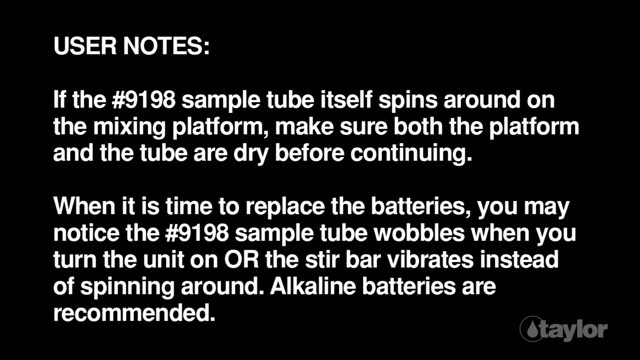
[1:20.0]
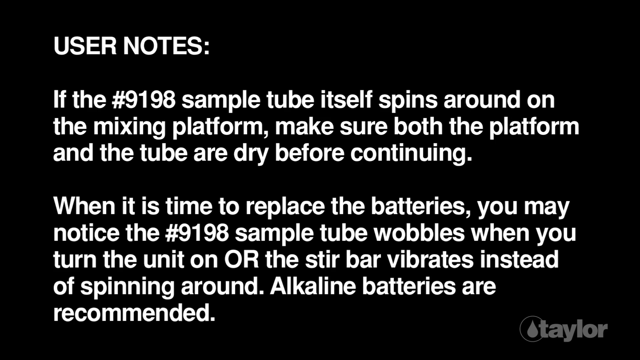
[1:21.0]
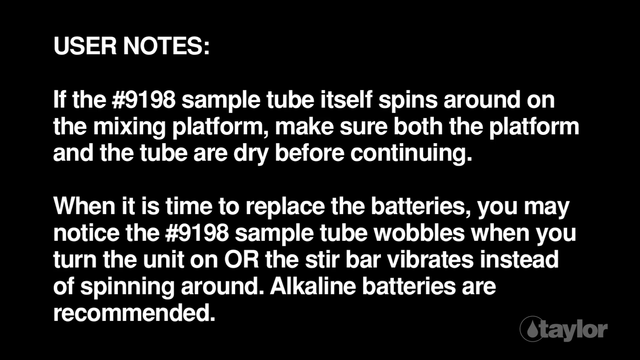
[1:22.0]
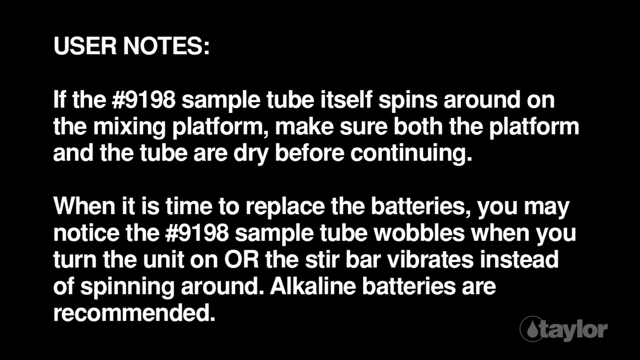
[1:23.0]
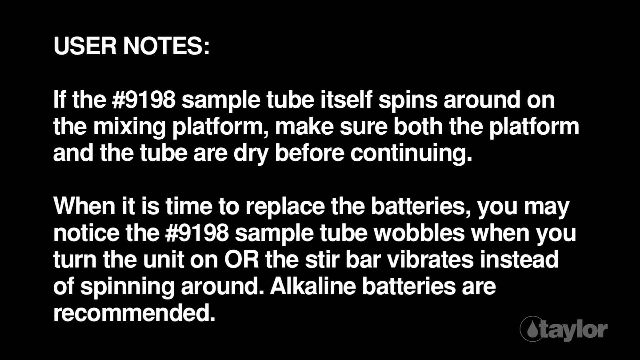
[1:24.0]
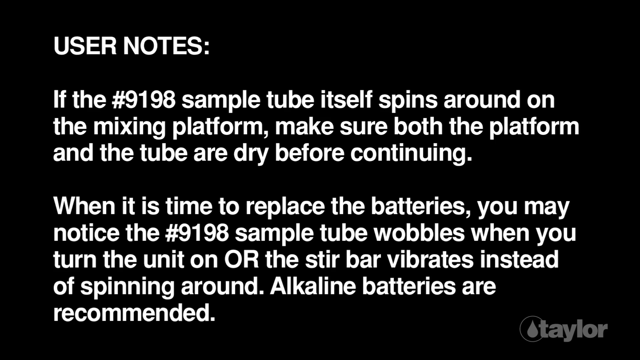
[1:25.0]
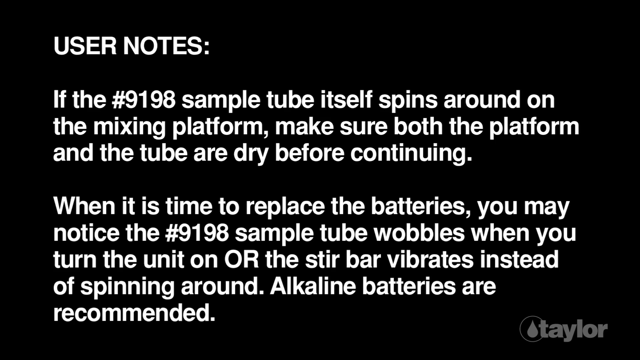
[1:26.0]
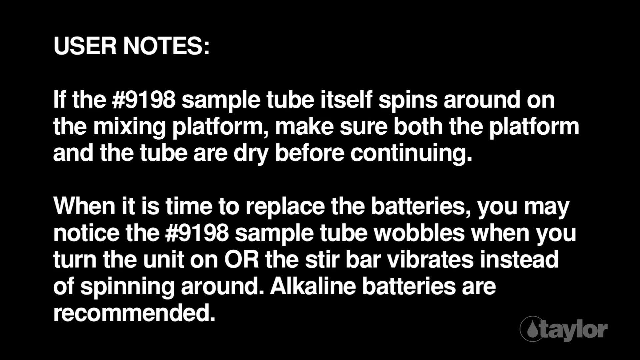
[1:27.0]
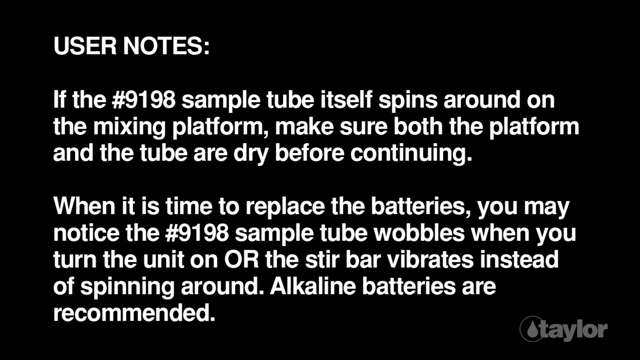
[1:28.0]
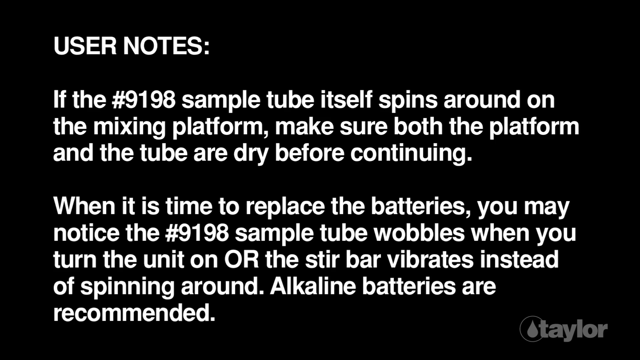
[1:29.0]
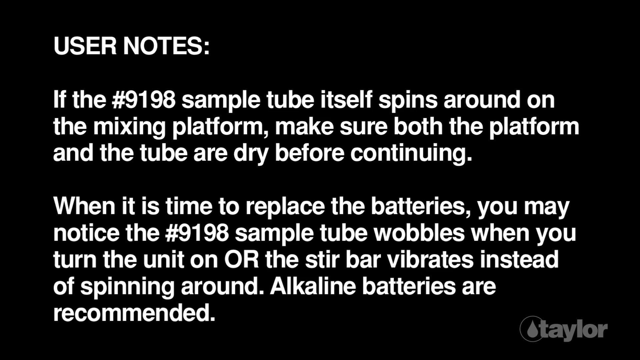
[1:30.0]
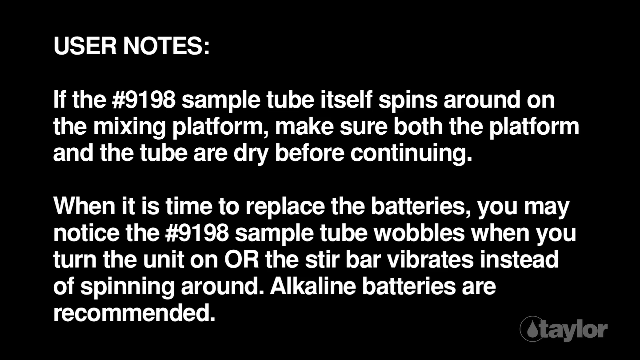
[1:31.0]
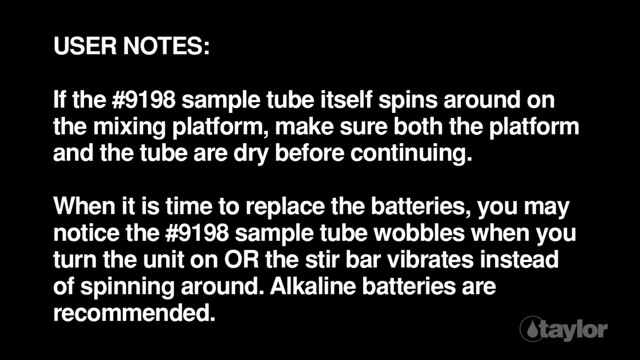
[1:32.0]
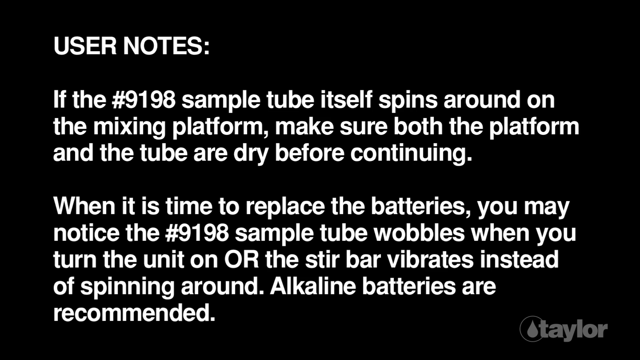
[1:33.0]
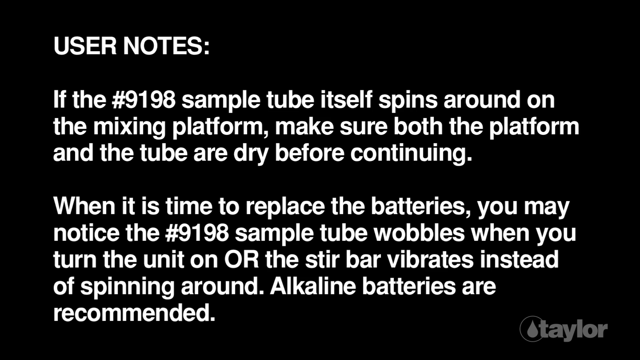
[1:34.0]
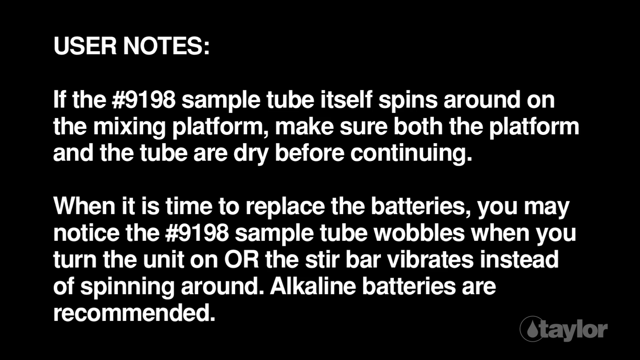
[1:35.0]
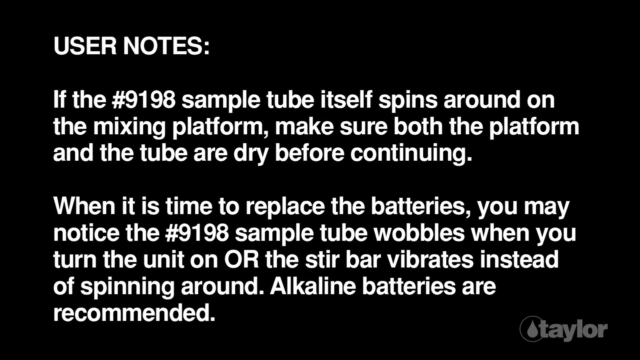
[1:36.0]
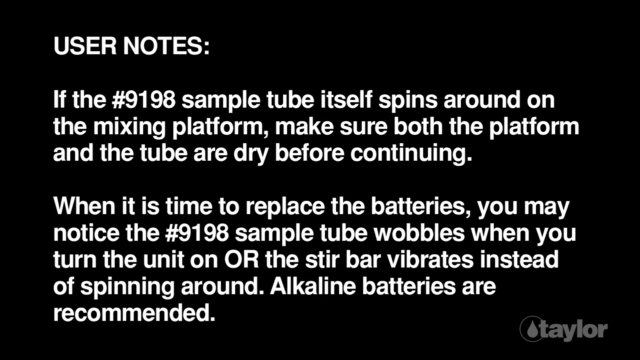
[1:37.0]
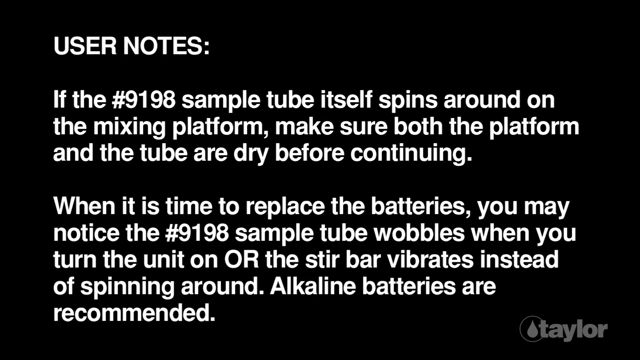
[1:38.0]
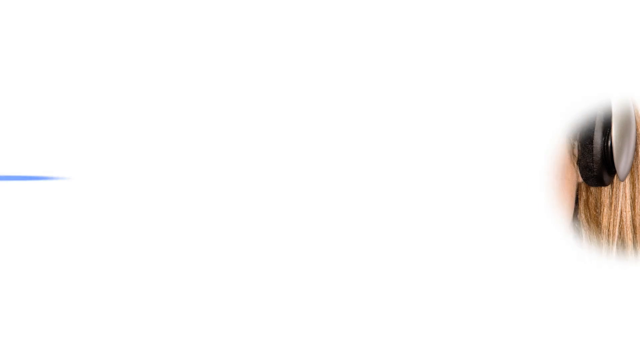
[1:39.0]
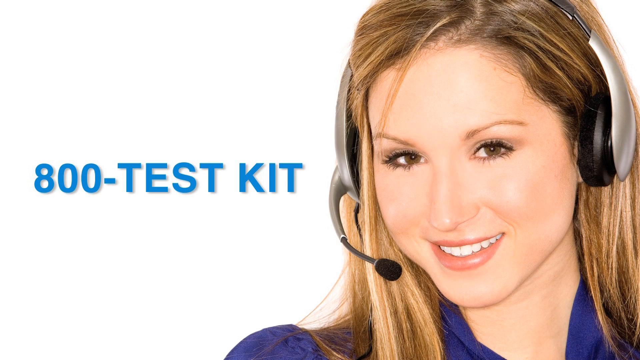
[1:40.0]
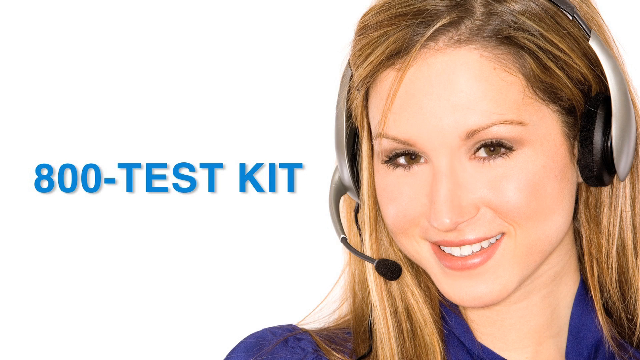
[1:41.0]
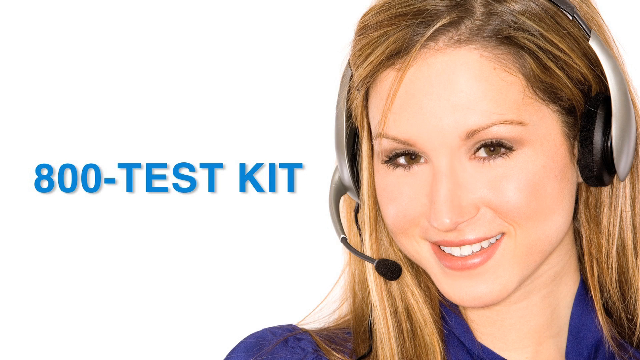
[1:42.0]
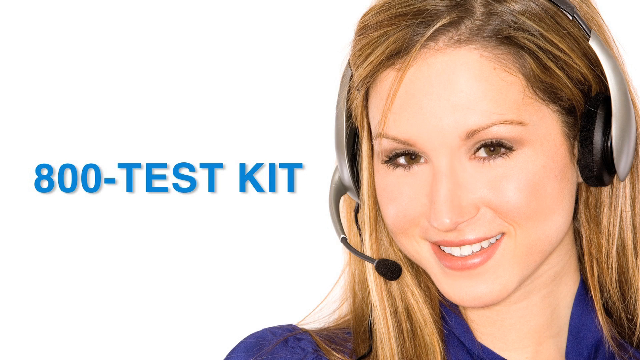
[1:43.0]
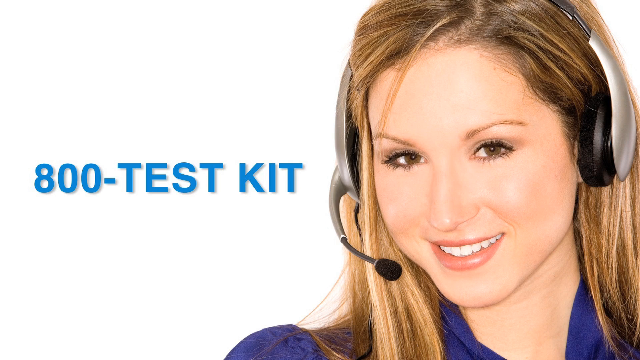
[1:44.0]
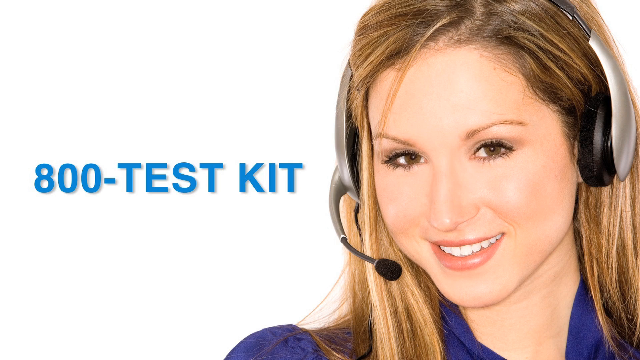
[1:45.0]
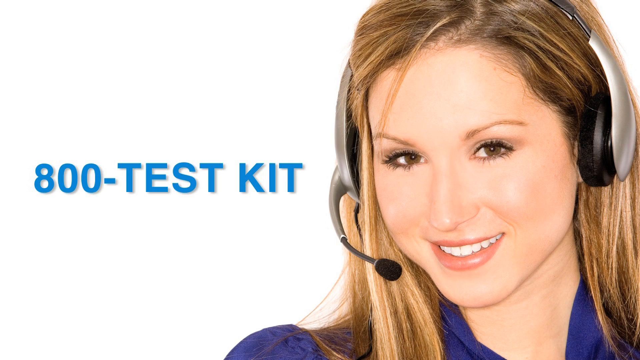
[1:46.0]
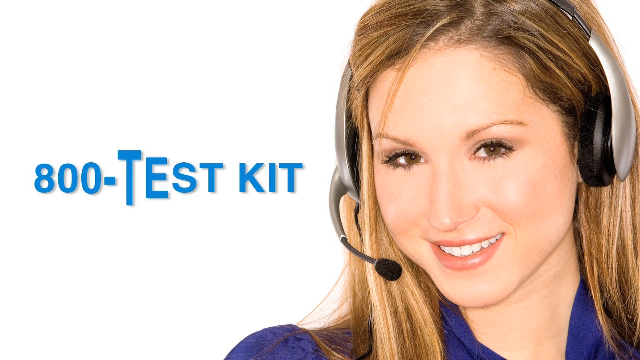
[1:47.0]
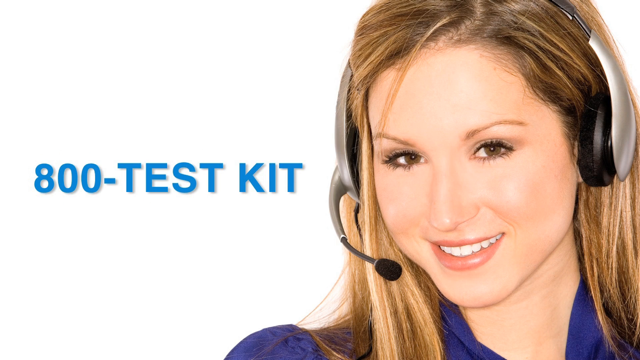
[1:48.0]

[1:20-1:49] On a black background, white all-caps text in the upper left reads "user notes" followed by a semicolon. Underneath, in bold white text in mixed upper and lower case, all aligned to the left, the first paragraph reads "If the number 9198 sample tube itself spins around on the mixing platform, make sure both the platform and the tube are dry before continuing." The next paragraph reads "When it is time to replace the batteries, you may notice the number 9198 sample tube wobbles when you turn the unit on, or the stir bar vibrates instead of spinning around. Alkaline batteries are recommended", with an "or" written in capital letters. The text apparently stays on screen for about 10 seconds. The scene then switches to a white background with a smiling Caucasian woman on the right. She wears red-orange lipstick, has long sandy blondish-brown hair with a messy part on the right side and one wispy piece of hair coming down on her forehead, and wears a black and silver headset with a small microphone in front of her mouth. On the left, in bold blue letters and numbers, is "800-TEST-KIT", with TEST-KIT in sans-serif all caps. A ripple effect makes each letter and number become big and then small, one at a time.